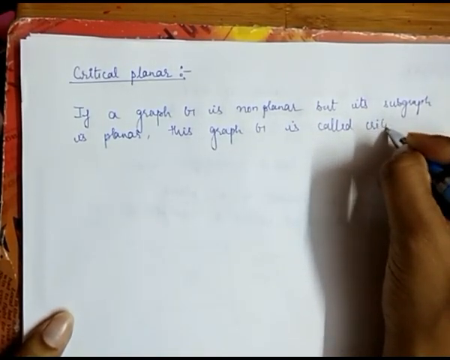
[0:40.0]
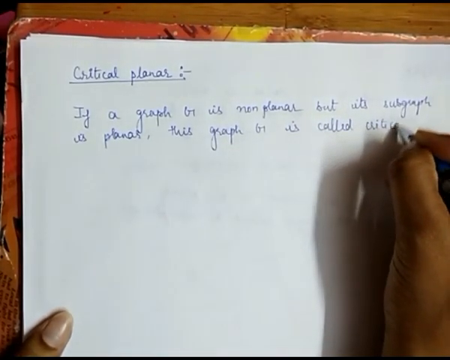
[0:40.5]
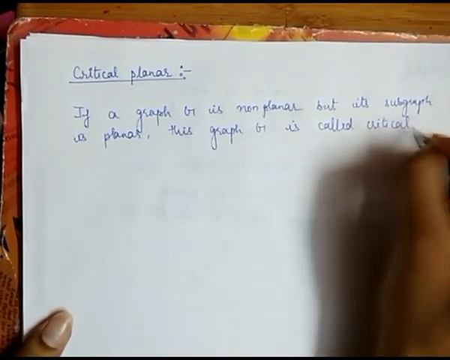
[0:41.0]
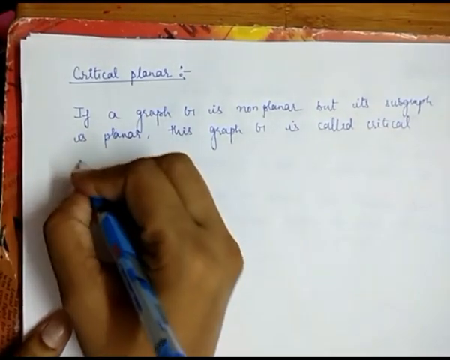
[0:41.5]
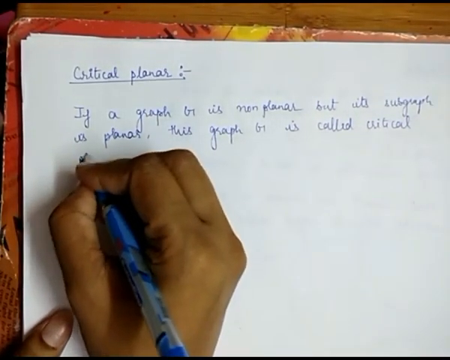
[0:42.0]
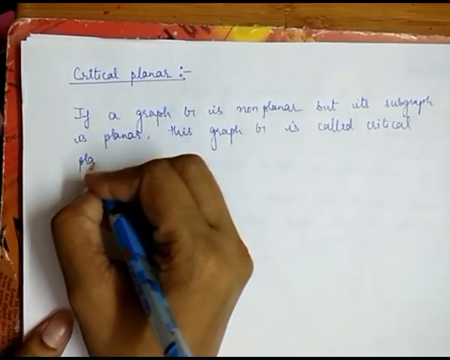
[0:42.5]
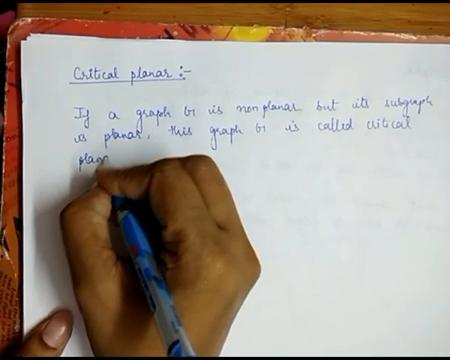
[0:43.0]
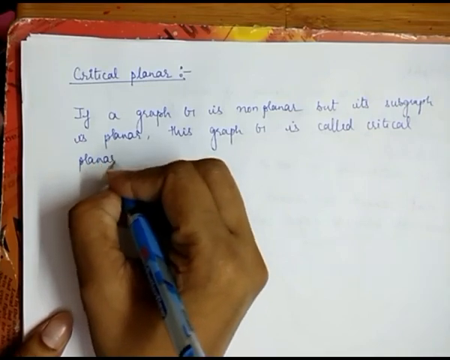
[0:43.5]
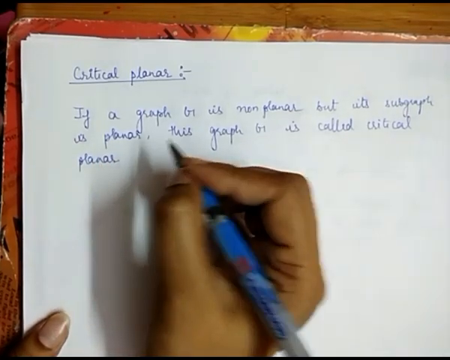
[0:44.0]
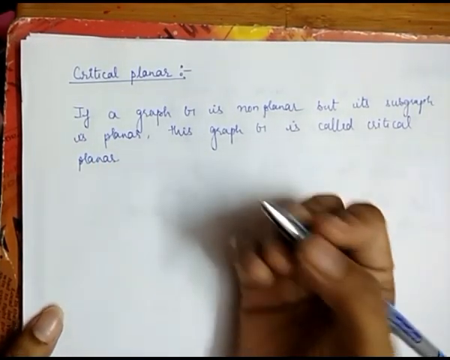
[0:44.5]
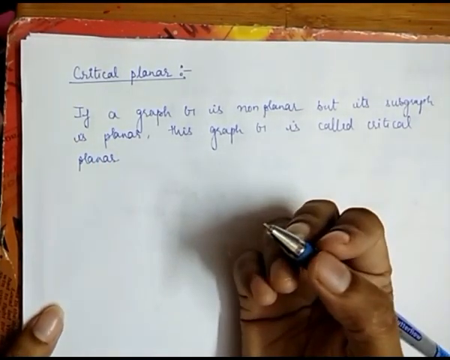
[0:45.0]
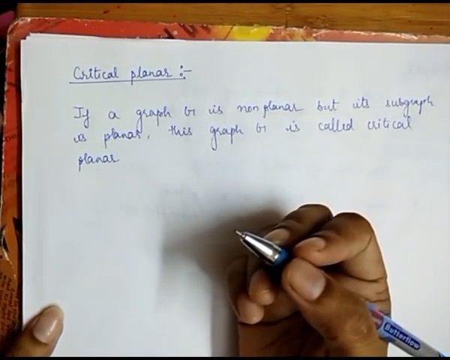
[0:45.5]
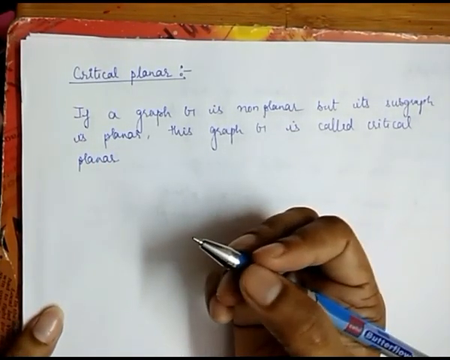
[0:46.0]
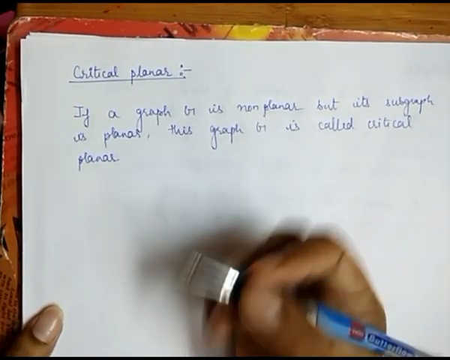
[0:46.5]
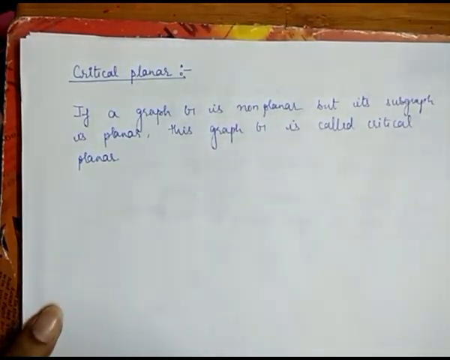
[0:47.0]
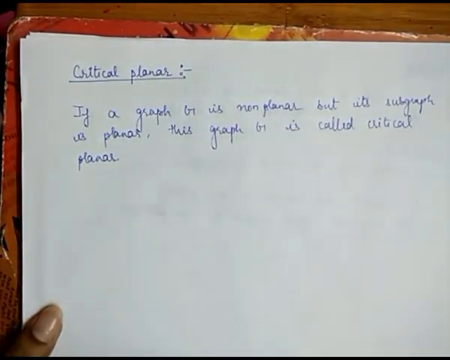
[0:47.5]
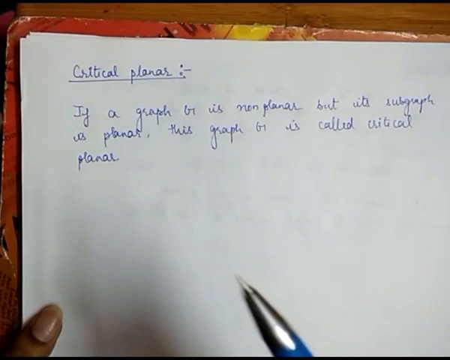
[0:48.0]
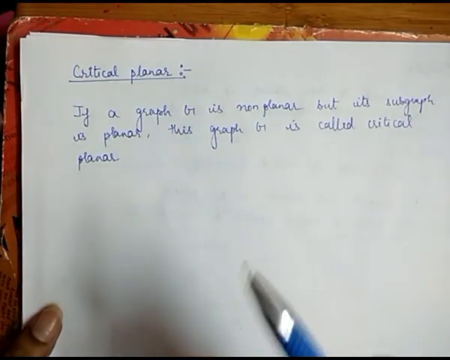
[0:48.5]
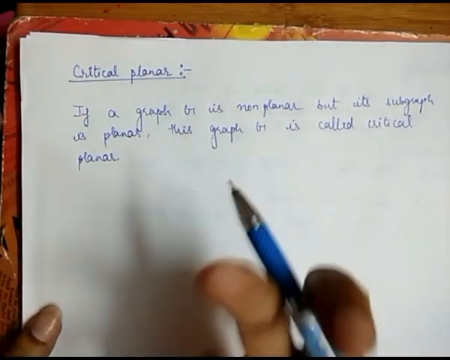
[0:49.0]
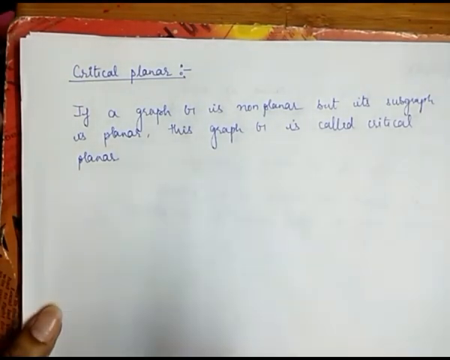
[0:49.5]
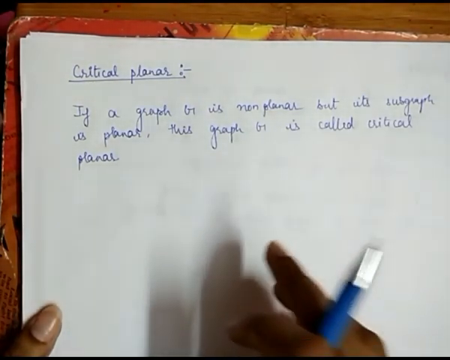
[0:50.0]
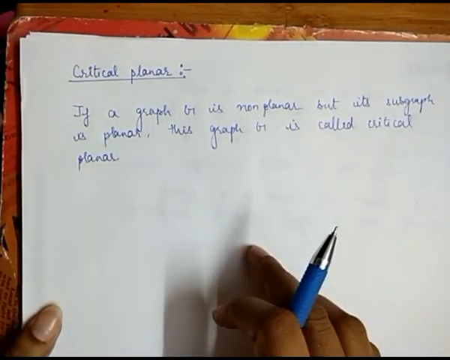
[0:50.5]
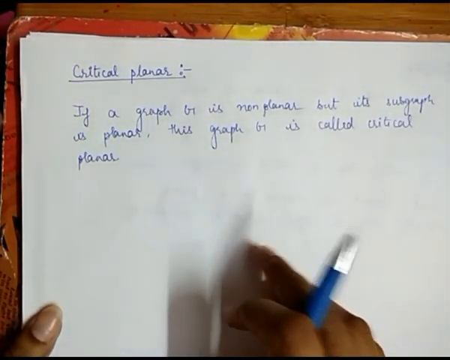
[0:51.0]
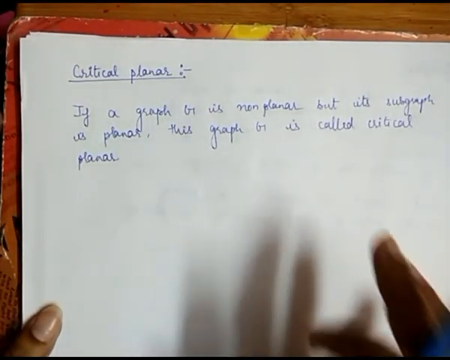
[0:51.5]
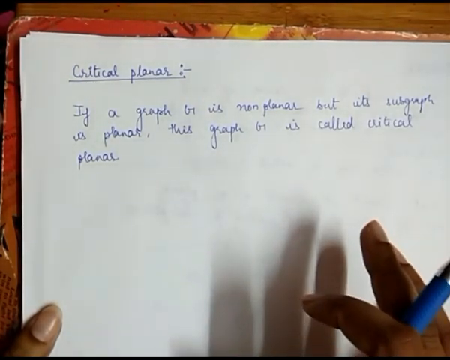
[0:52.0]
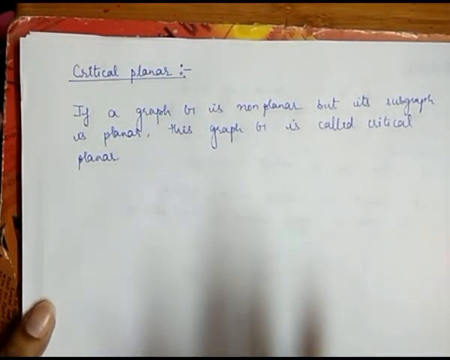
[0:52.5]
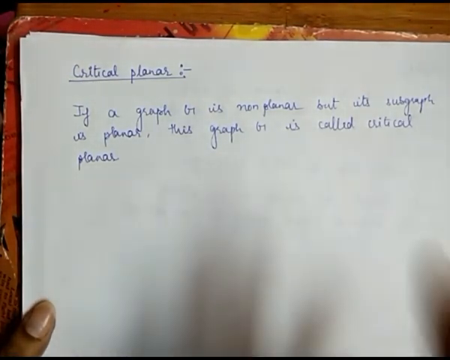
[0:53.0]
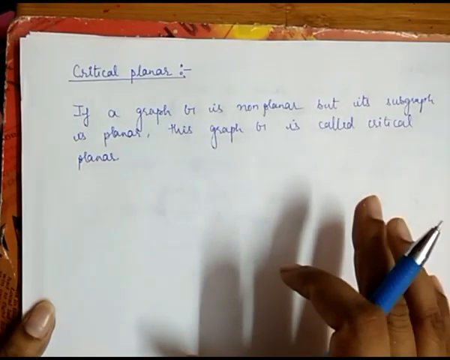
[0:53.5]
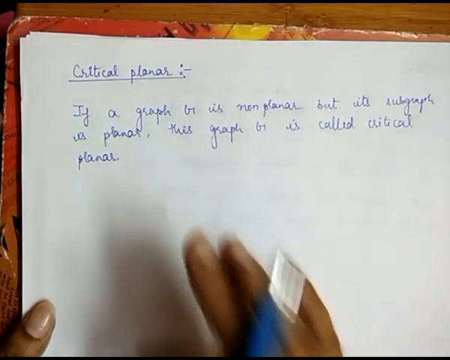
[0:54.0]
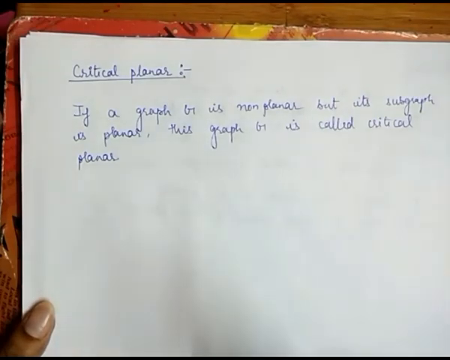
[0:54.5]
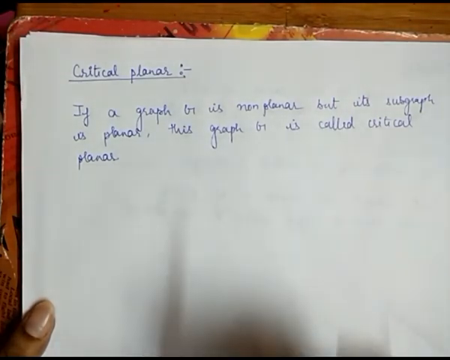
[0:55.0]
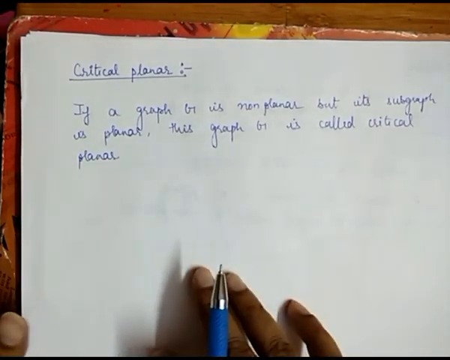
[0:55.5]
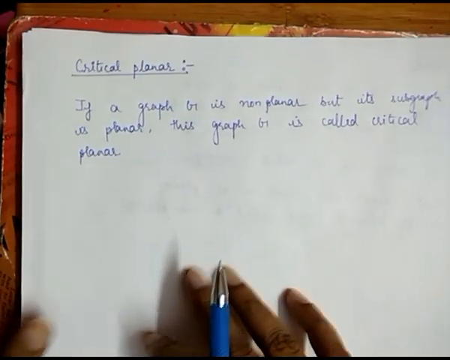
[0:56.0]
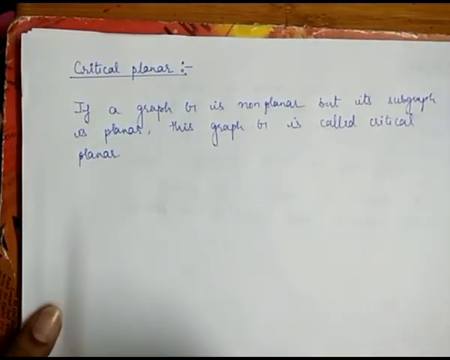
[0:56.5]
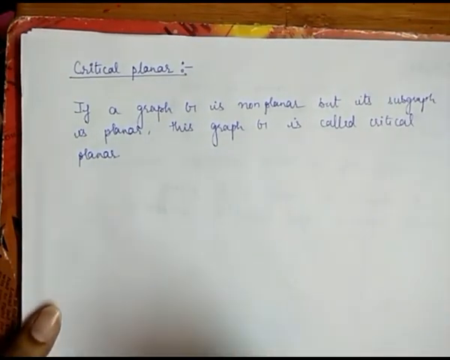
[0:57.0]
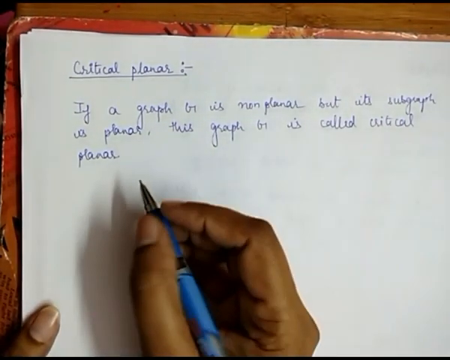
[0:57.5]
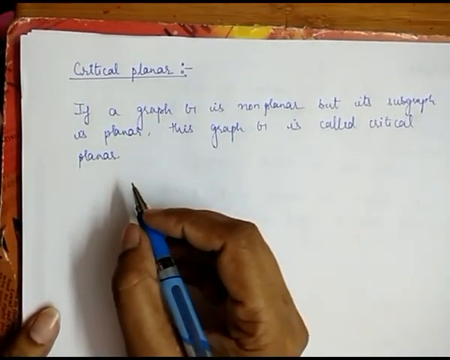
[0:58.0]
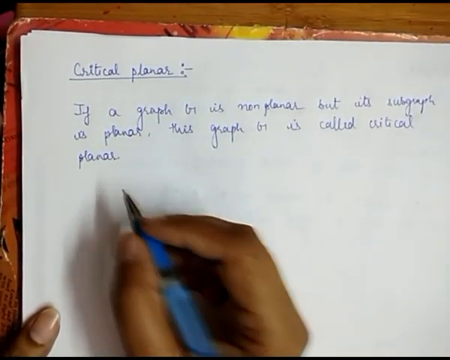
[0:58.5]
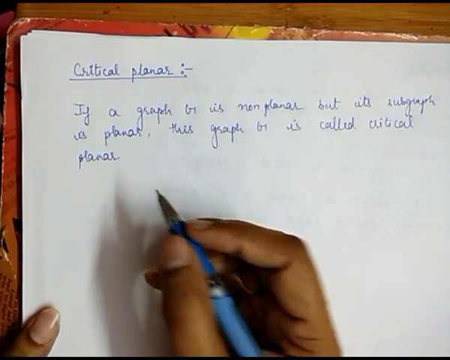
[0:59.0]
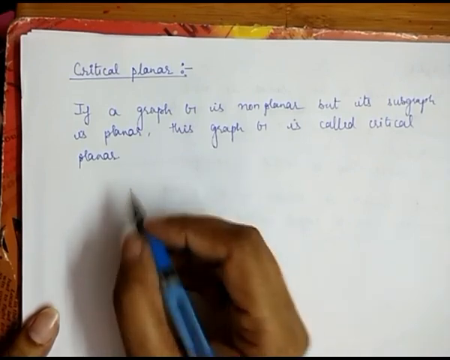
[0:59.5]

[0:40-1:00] The red, yellow and orange mat is on the wooden table with the white paper on it, and the darker-skinned woman writes in blue ink with the blue and gray pen while her left thumbnail holds down the paper in the bottom left-hand corner. She continues writing: "is called critical planner". She holds the pen up off the paper, showing the palm of her hand, the tip of the pen and all of her fingertips. She lifts the pen and her hand completely out of the frame, then the tip of the pen comes back in as if emphasizing a point. Starting with just her middle finger and then using all of her fingers, with the pen clenched between the knuckles of her first and second fingers, she moves her hand up and down as if explaining or emphasizing a point. She lifts her left thumb off the paper and moves the paper slightly to adjust it. She brings the pen back to the last word she wrote, moves it up and down as if hesitating, discussing or explaining something, and then begins again.